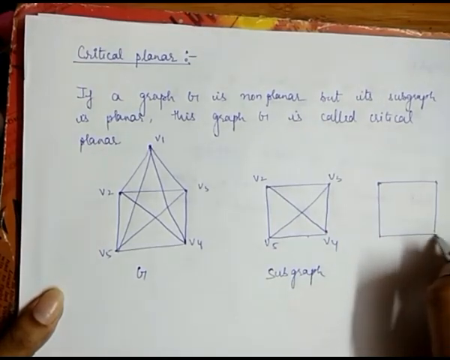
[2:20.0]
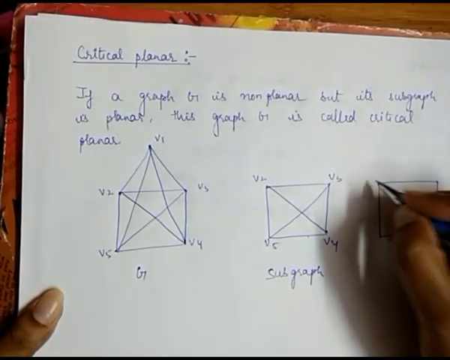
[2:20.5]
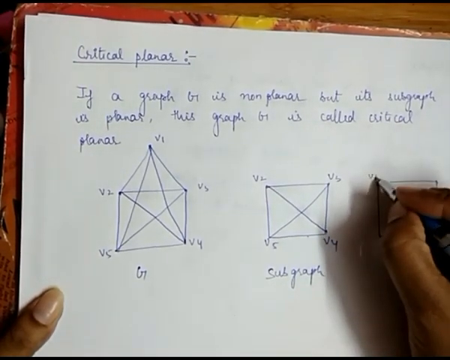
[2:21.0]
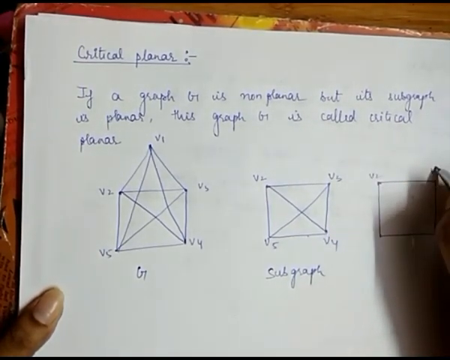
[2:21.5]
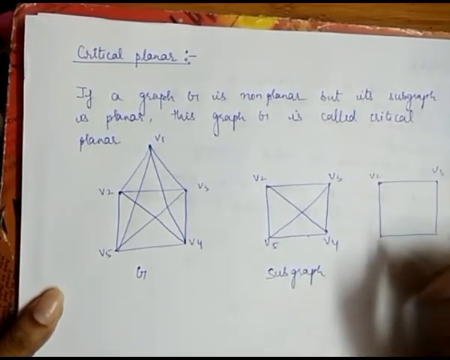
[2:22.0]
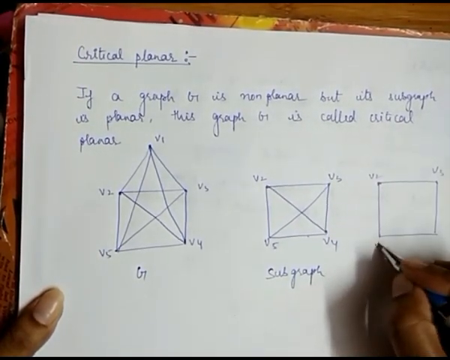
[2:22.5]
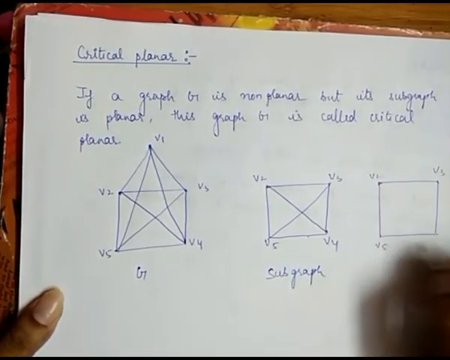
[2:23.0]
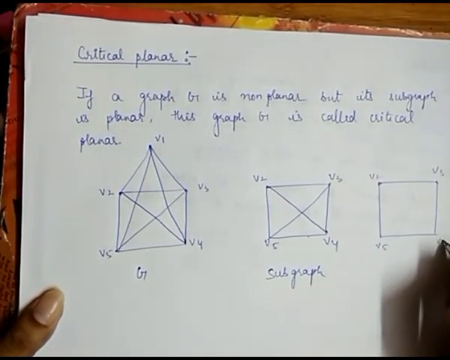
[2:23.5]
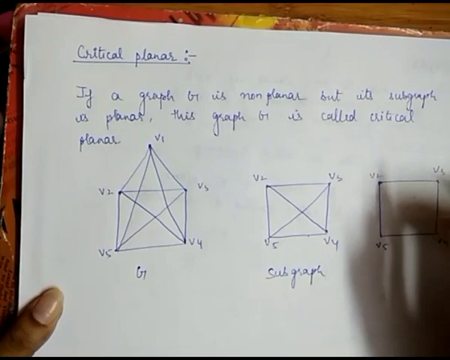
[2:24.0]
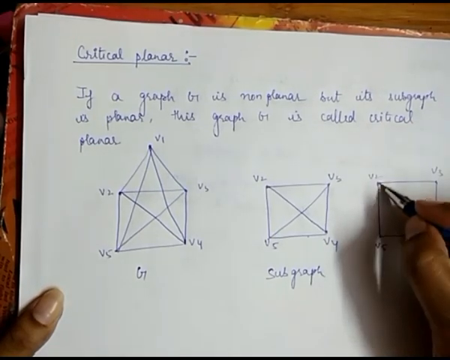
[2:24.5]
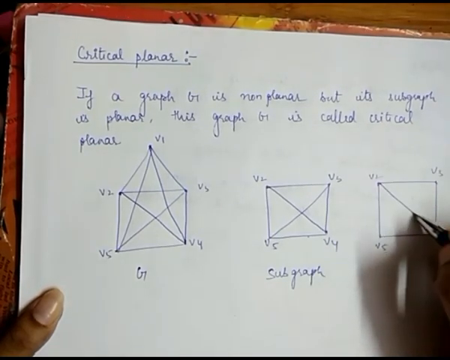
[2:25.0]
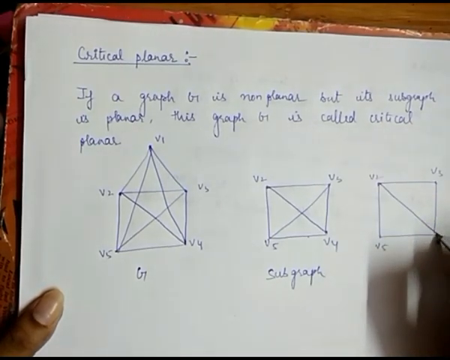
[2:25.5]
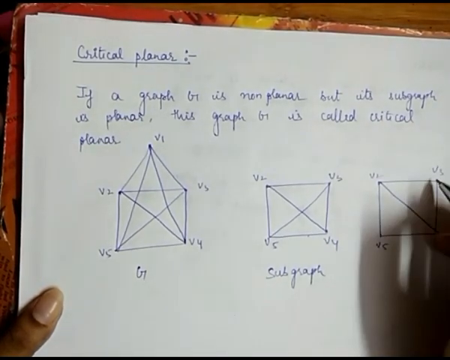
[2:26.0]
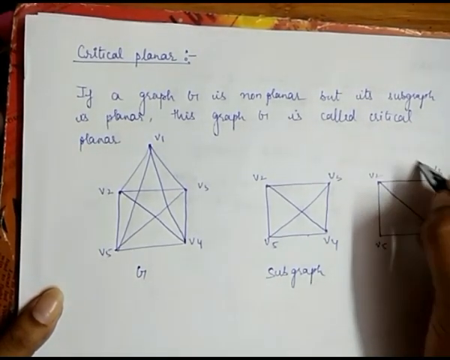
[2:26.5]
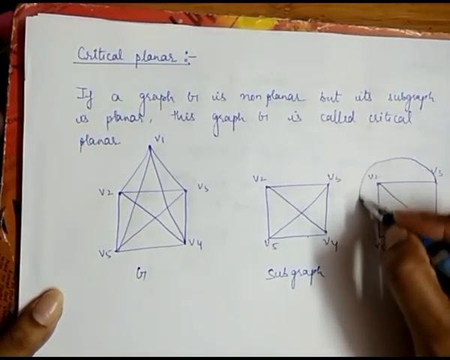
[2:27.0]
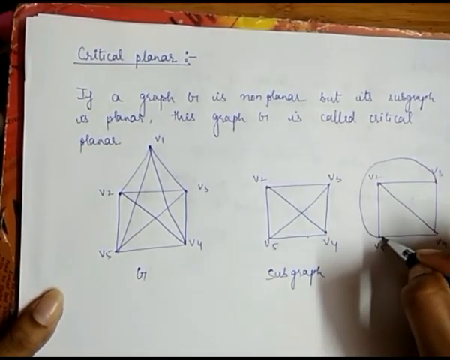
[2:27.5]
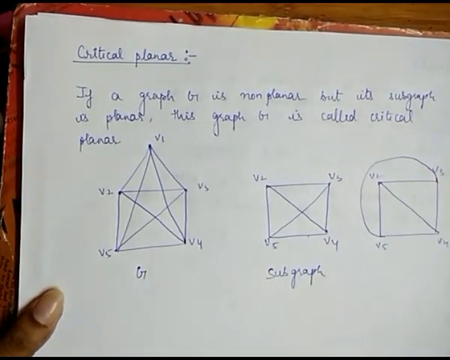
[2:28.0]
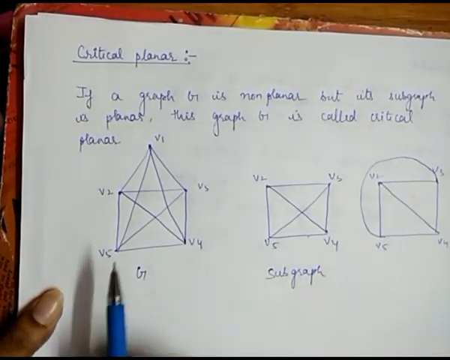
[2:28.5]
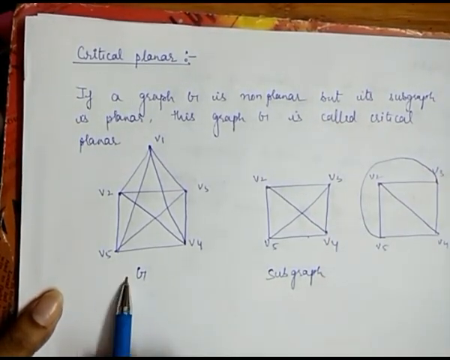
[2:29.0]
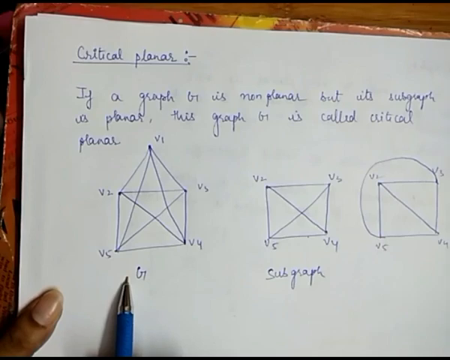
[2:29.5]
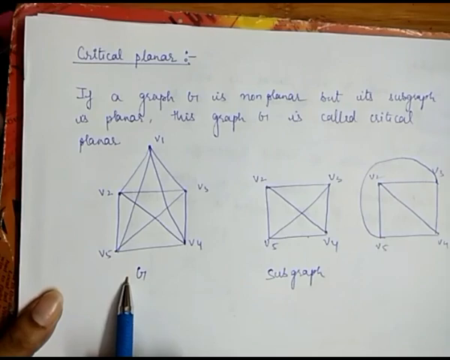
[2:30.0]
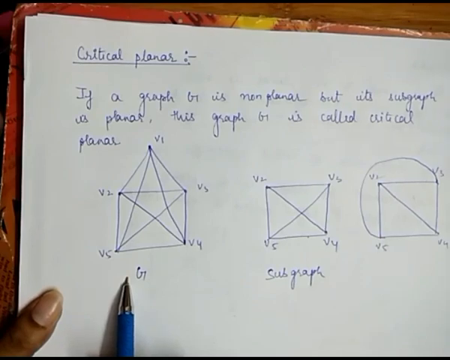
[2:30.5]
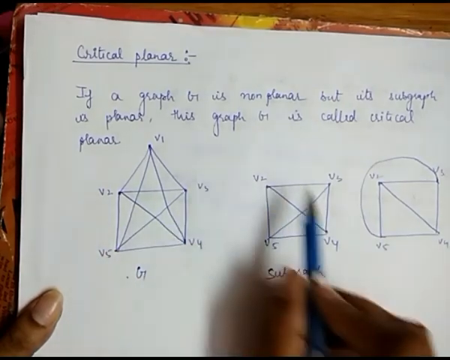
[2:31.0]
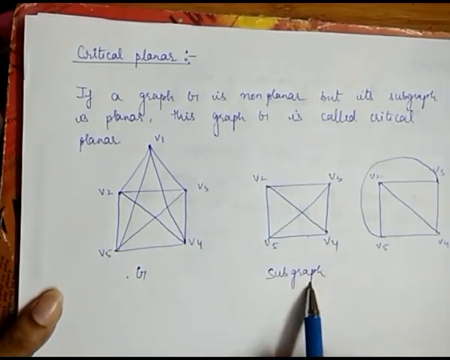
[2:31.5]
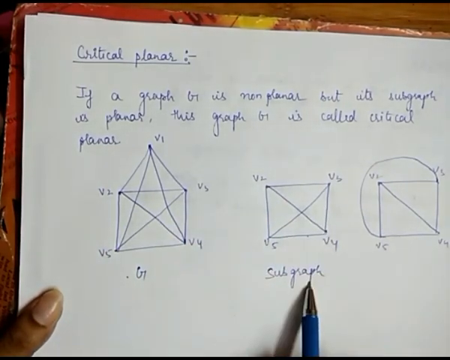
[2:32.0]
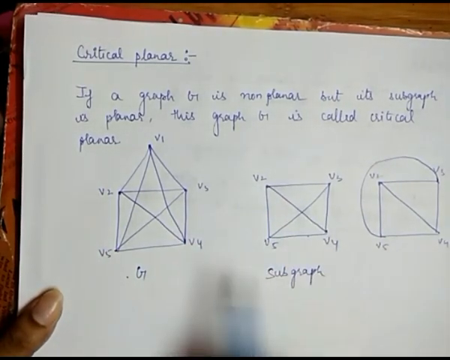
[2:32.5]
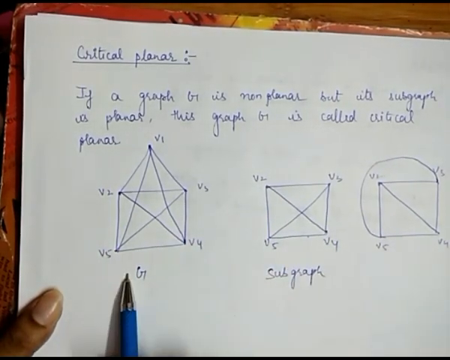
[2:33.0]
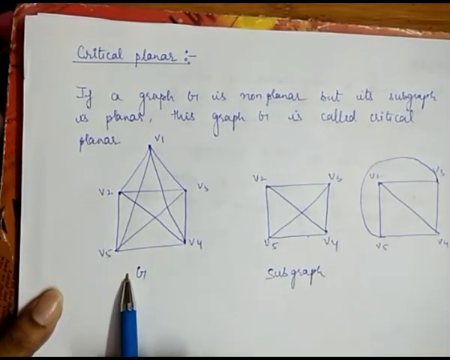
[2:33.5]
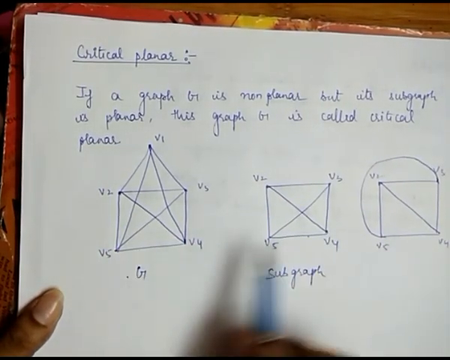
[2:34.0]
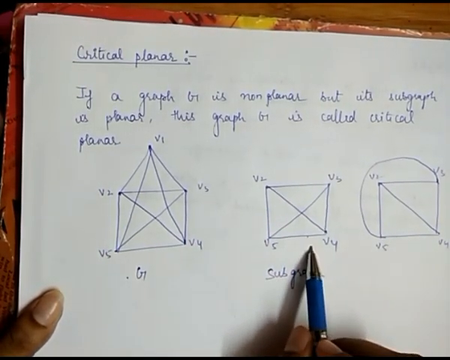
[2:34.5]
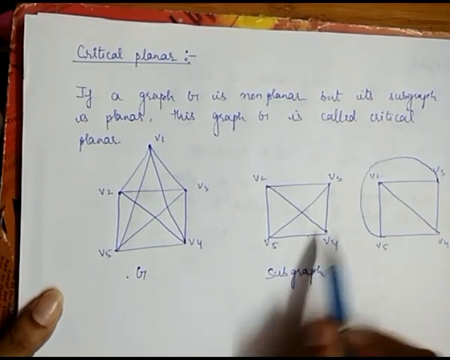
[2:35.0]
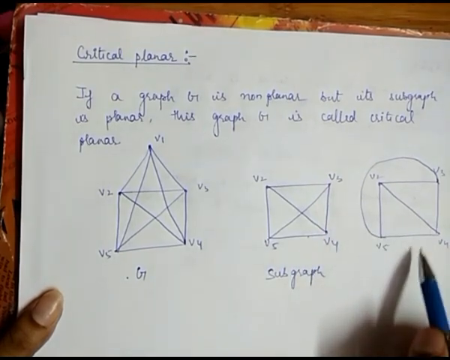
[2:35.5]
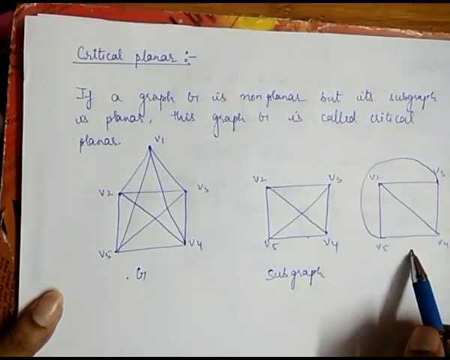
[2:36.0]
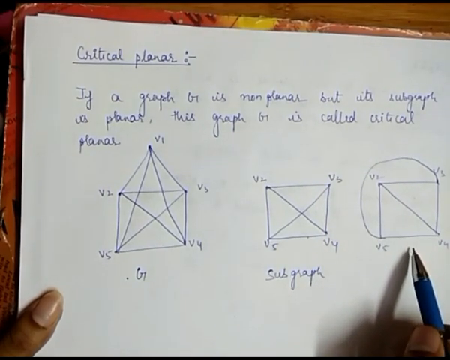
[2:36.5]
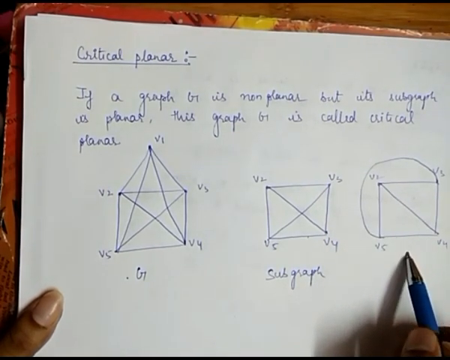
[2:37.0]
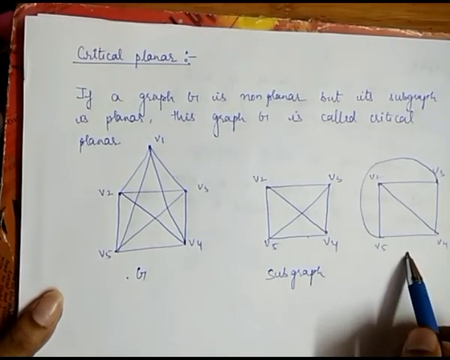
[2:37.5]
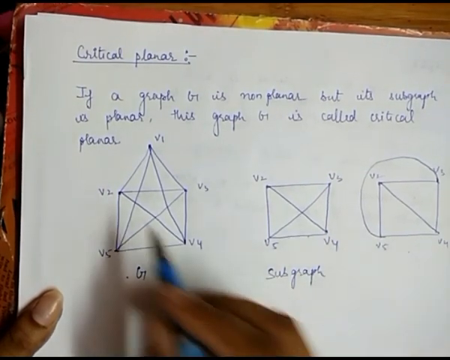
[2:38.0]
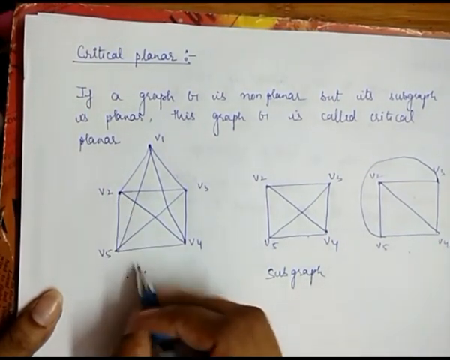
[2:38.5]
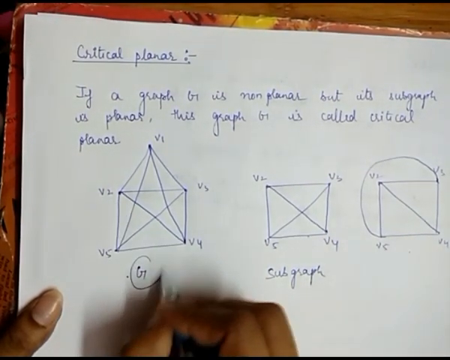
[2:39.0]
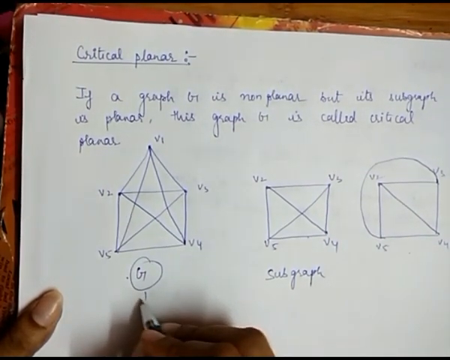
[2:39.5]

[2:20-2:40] With her pen in the lower right-hand corner of the new square, the woman writes V2 in the upper left corner, V3 in the upper right corner, V5 in the lower left corner and V4 in the lower right corner. She draws a diagonal line from V2 to V4, and then, starting from the upper right of V3 on the outside of the square, draws a curve connecting V3 to V5. She points her pen under the G drawing, then under "subgraph", back to G, back to "subgraph" again, and then under her new drawing. She points at the top of her G drawing, circles the letter G under it, and draws a small arrow pointing down under the circled G.